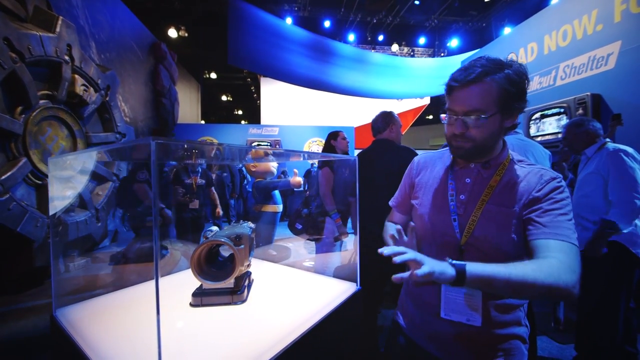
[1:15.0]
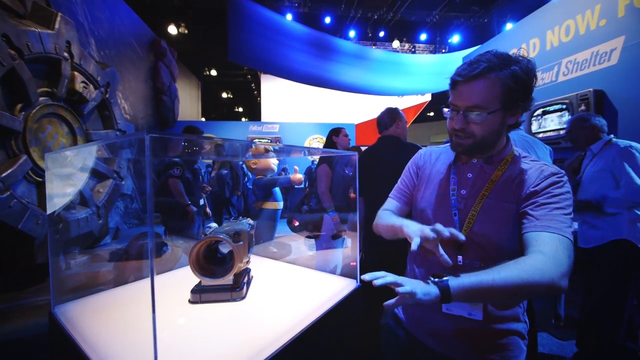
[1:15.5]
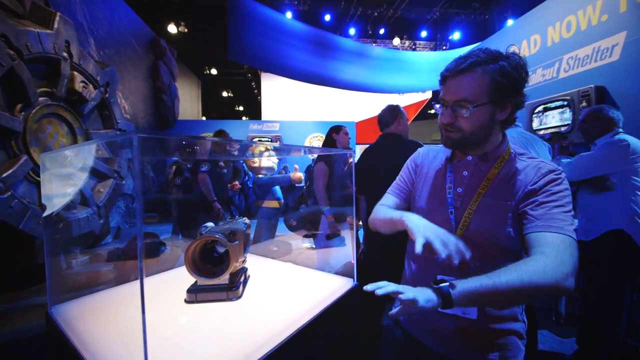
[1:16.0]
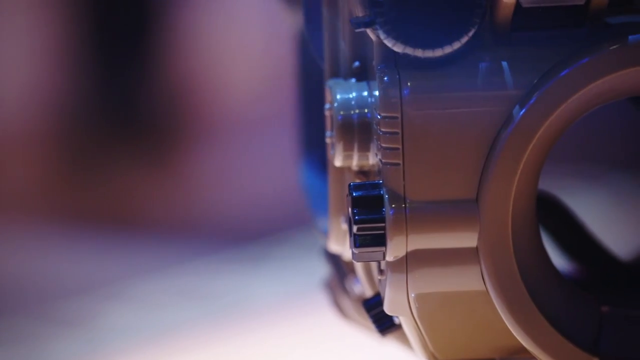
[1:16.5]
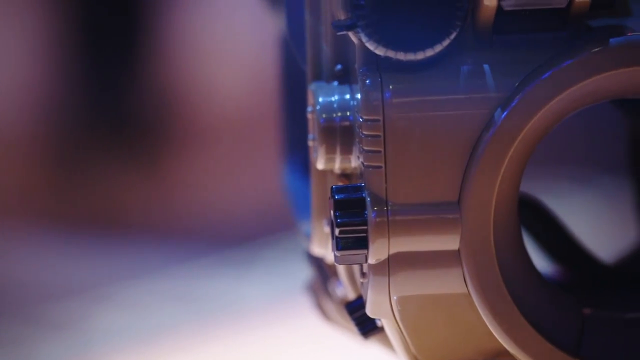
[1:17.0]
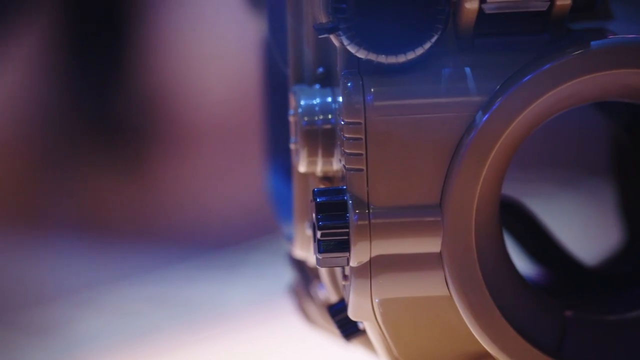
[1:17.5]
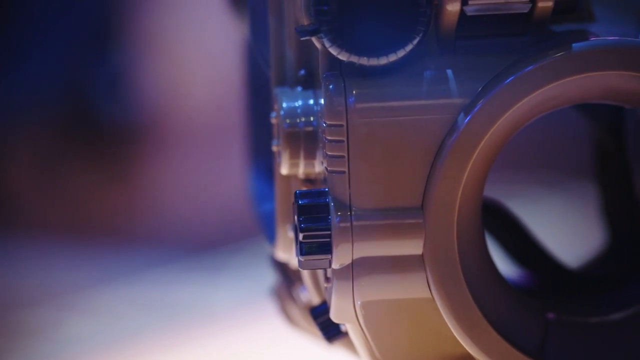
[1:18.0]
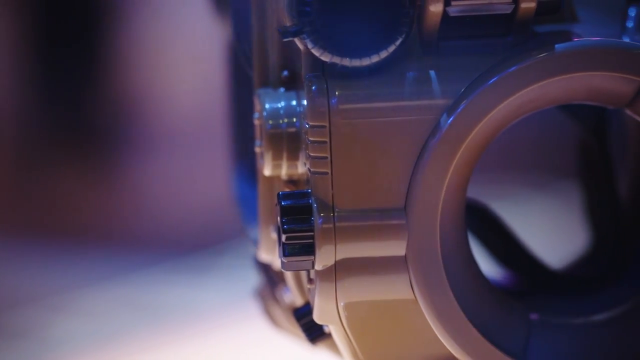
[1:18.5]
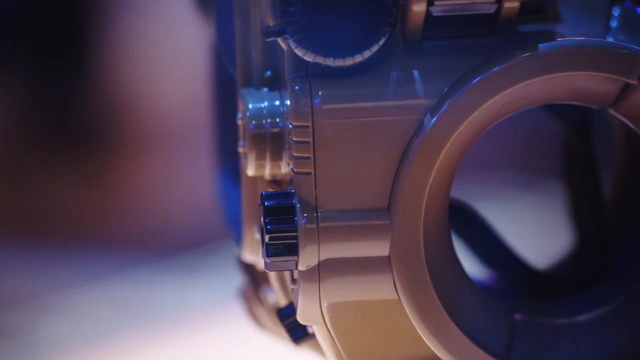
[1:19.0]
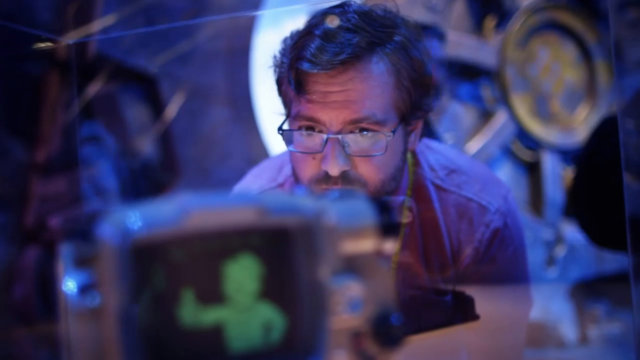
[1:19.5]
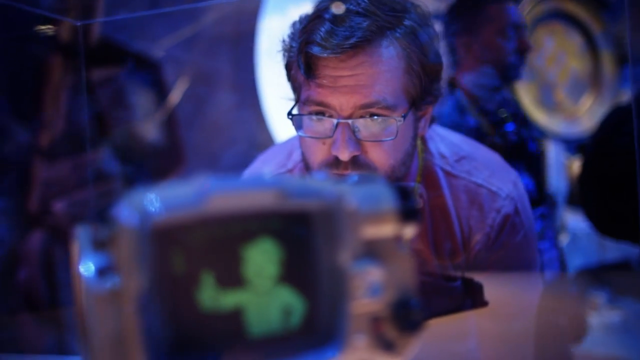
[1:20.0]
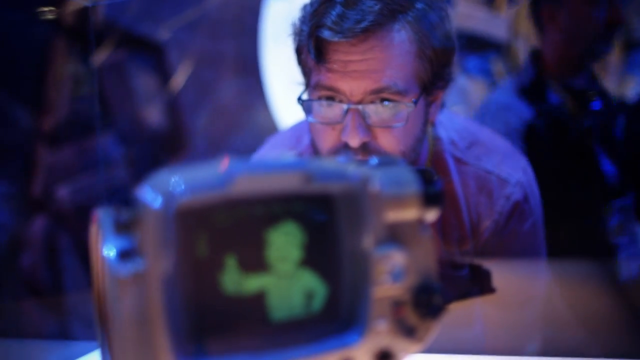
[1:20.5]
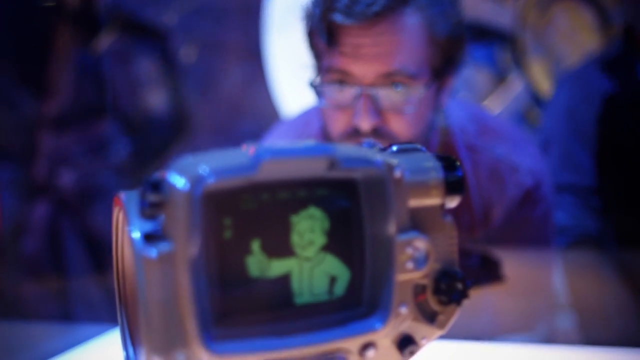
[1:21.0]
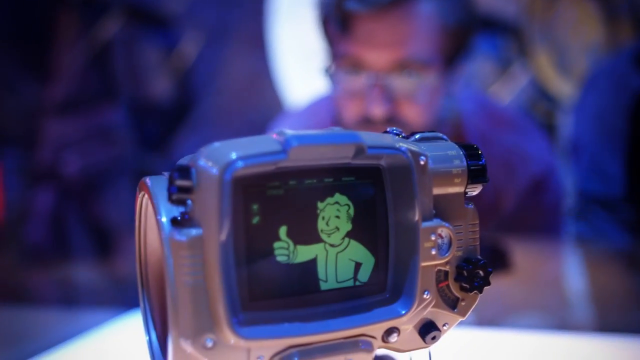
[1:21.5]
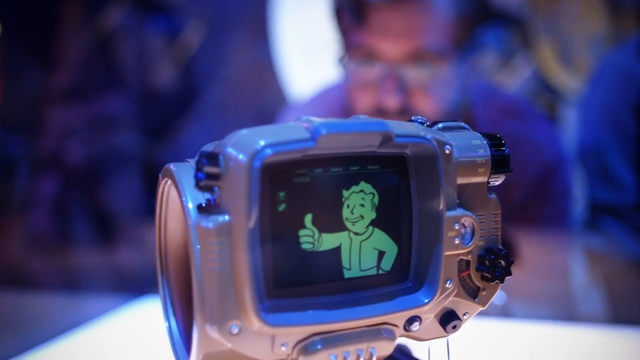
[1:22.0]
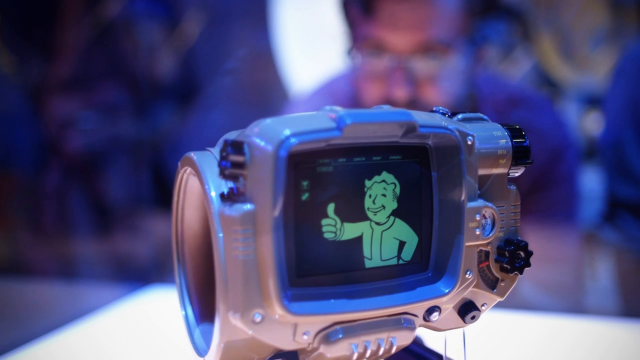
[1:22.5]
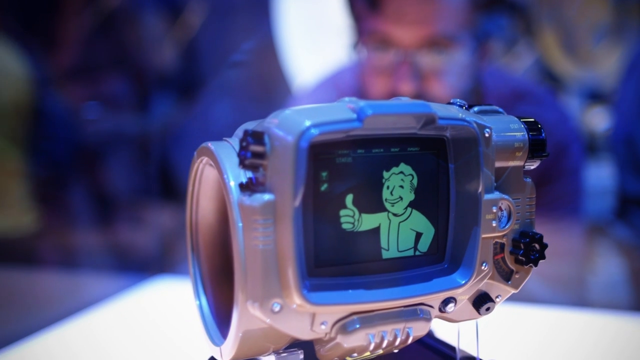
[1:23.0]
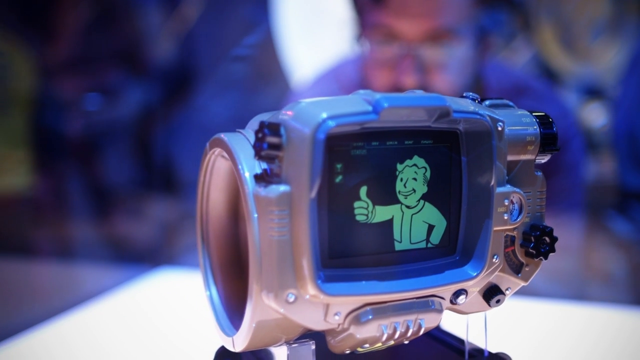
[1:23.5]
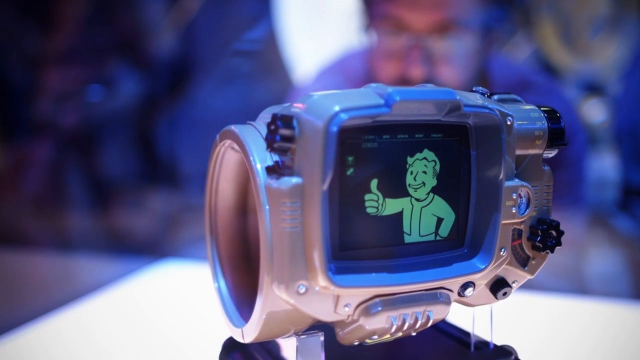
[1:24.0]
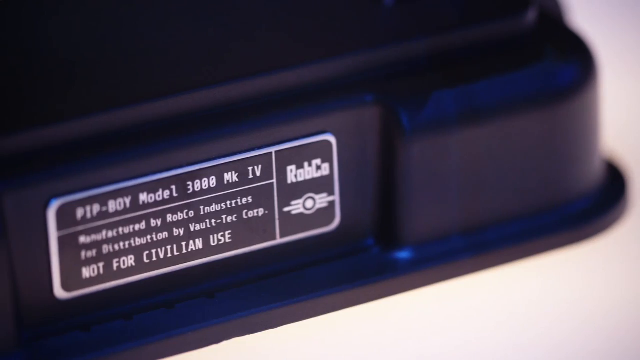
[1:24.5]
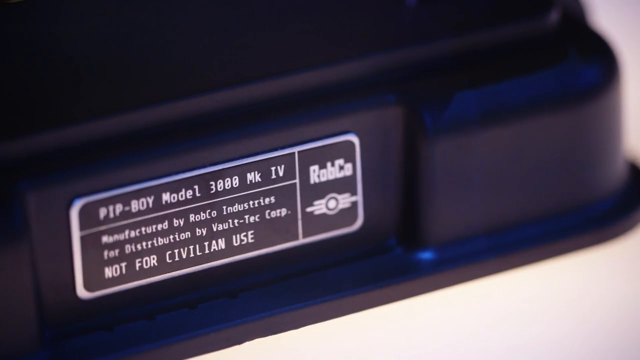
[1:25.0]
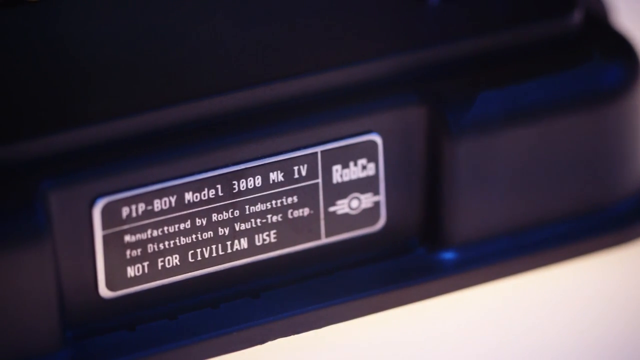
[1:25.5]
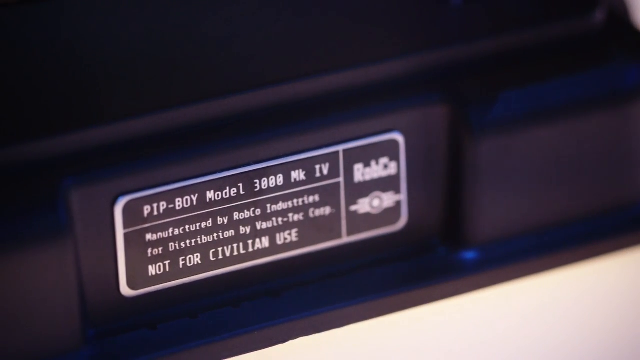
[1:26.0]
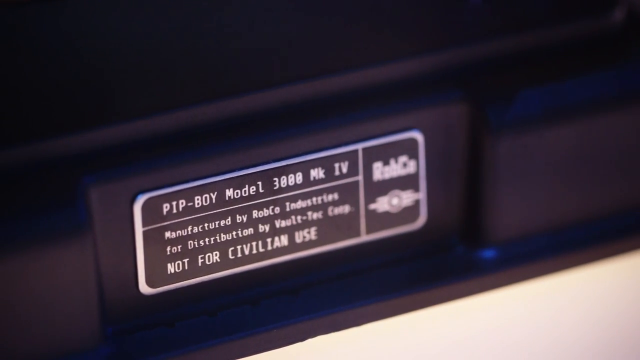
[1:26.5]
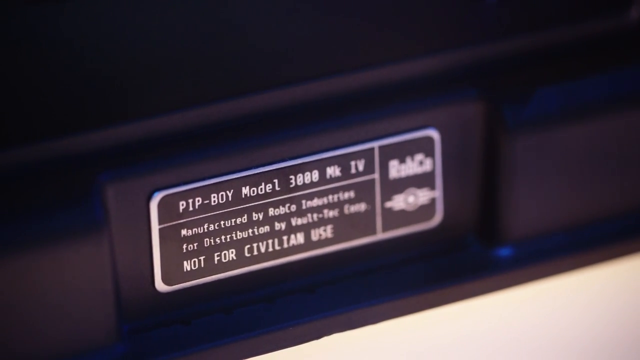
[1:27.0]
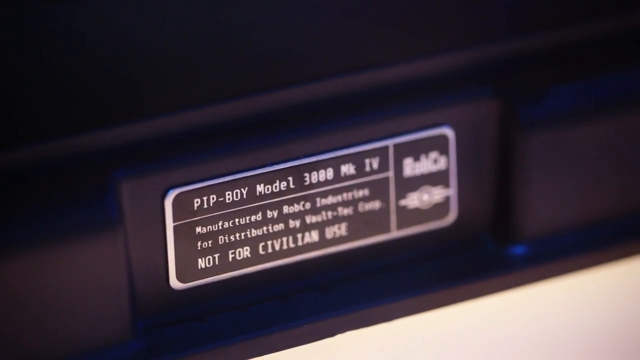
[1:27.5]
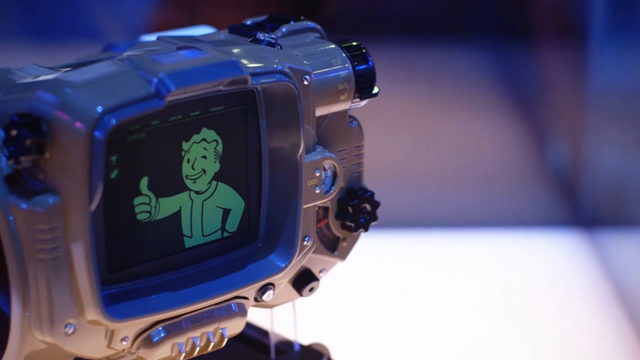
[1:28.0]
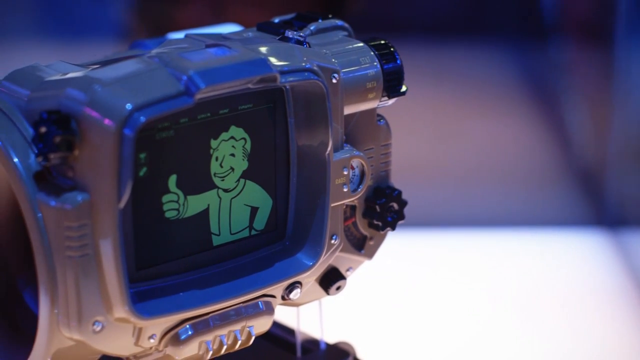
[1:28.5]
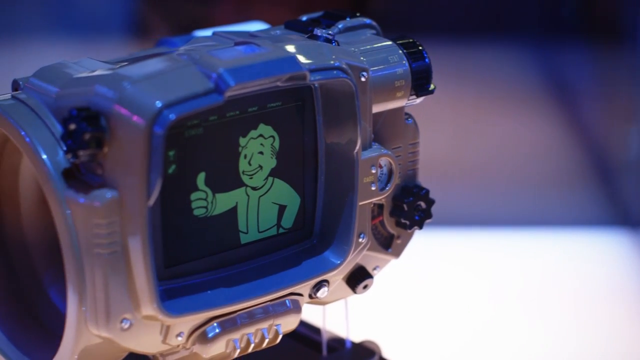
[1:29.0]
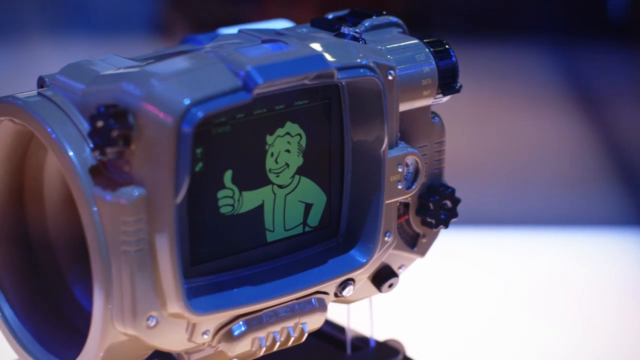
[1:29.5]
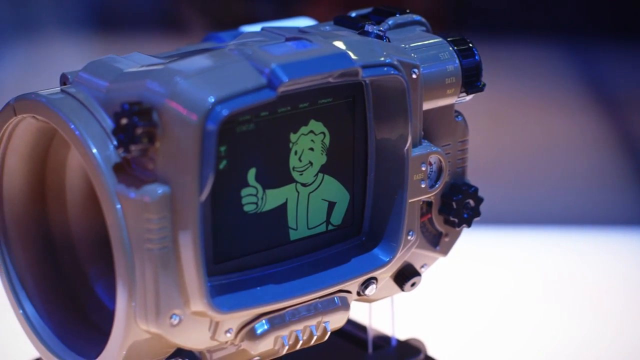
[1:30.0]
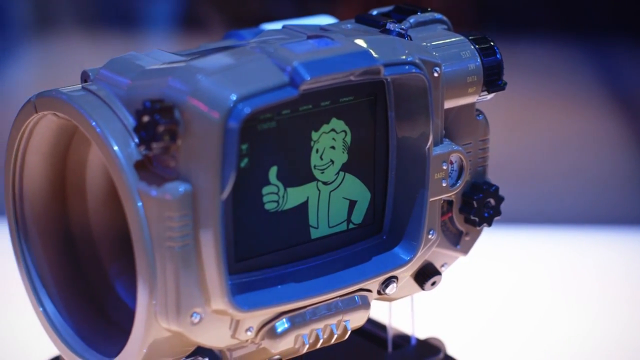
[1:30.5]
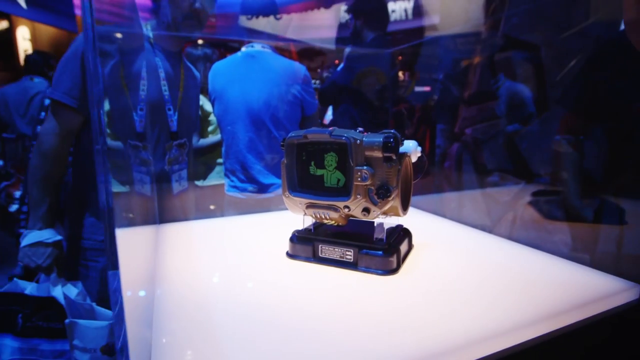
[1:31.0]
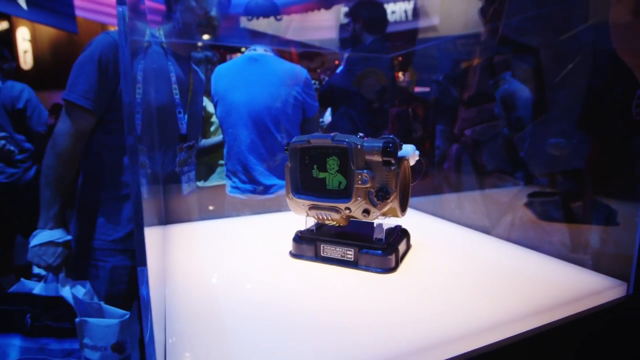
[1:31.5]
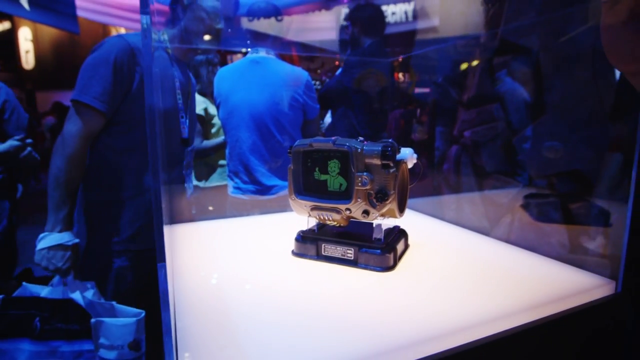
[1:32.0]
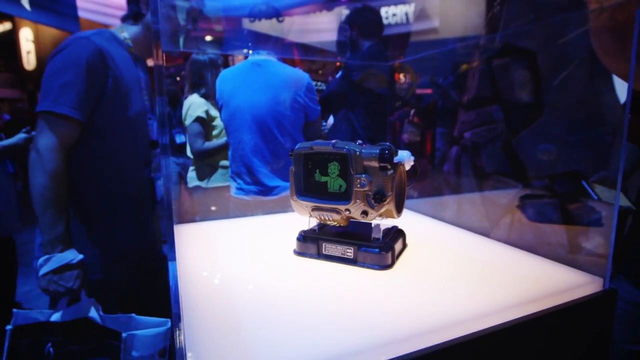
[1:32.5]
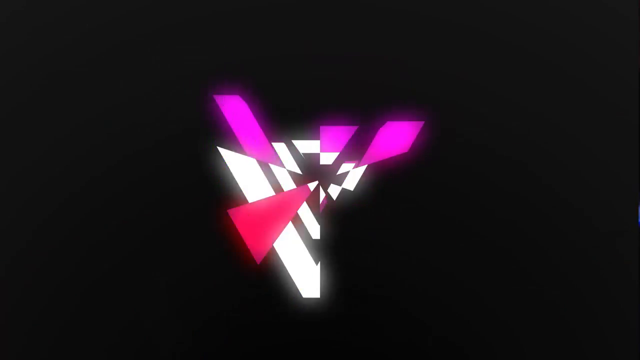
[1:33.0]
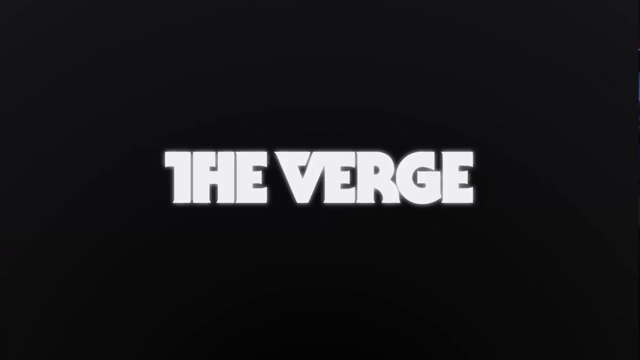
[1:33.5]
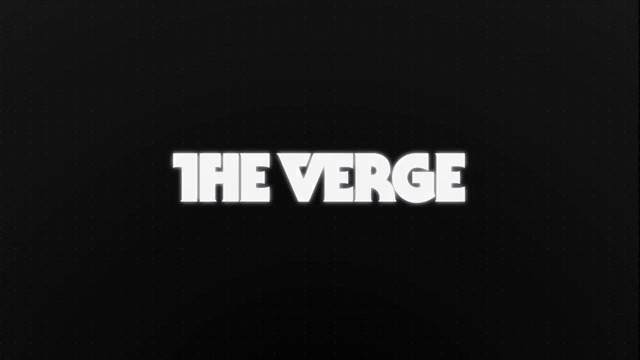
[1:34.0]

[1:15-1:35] A man talks, motioning with his right hand to his left hand. A tight shot shows the device with a man just beyond it looking at the device. The device has a "not-for-civilian-use" label and a black screen with a green character giving a thumbs up. A man motions with his hand toward his wrist, and a man with glasses looks at the device, which is in a case. A person in a yellow shirt walks past. A label mentions "model 3000". The device sits on a black pedestal, and "Verge" appears. A tight shot shows the gold device, and a man looks at it inside the clear case. A man holding a white and black bag looks at the device, and a man speaks to the camera. A tight shot shows black dials on the device. A man sits on a black case. The camera moves around the device, which sits on a white table in a black case. "The Verge" appears, there is a blue wall with white writing, and a character gives a thumbs up.